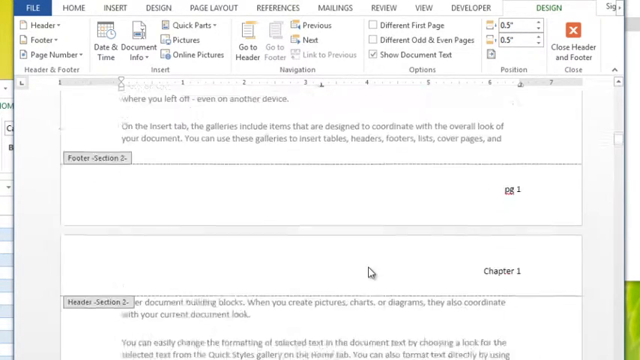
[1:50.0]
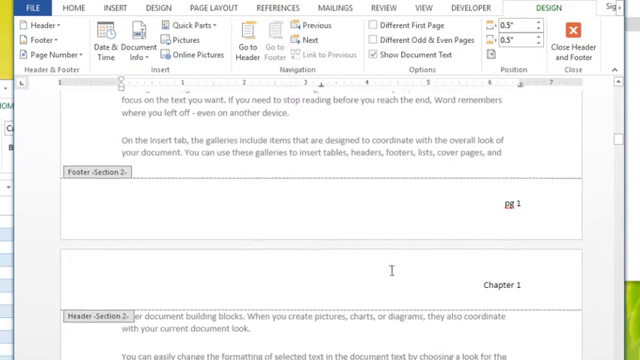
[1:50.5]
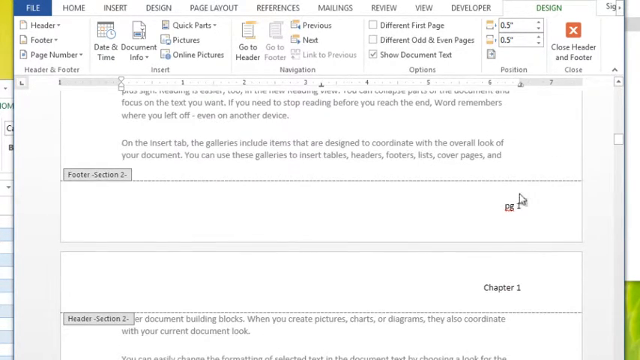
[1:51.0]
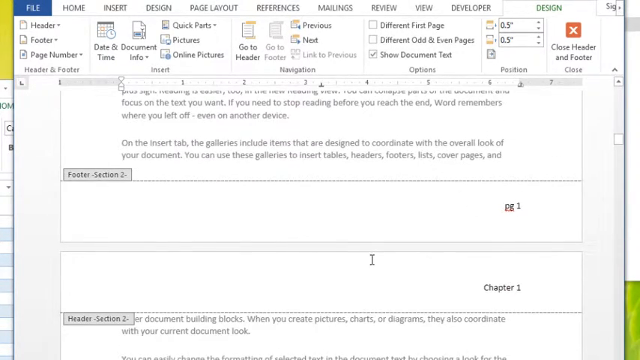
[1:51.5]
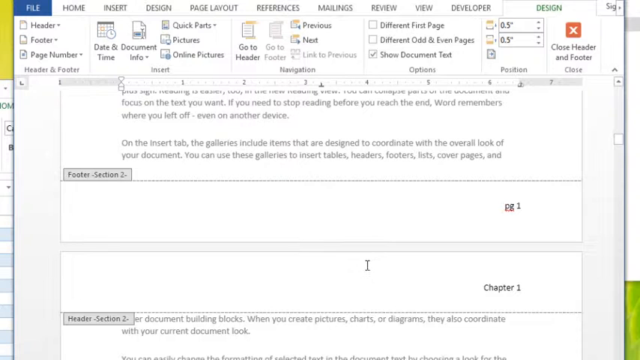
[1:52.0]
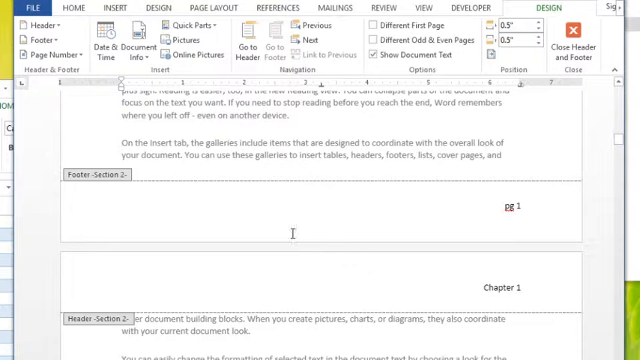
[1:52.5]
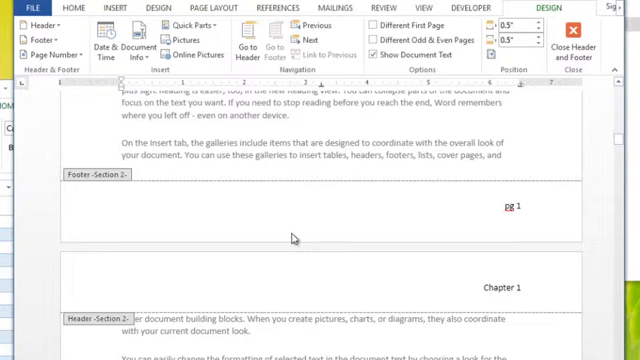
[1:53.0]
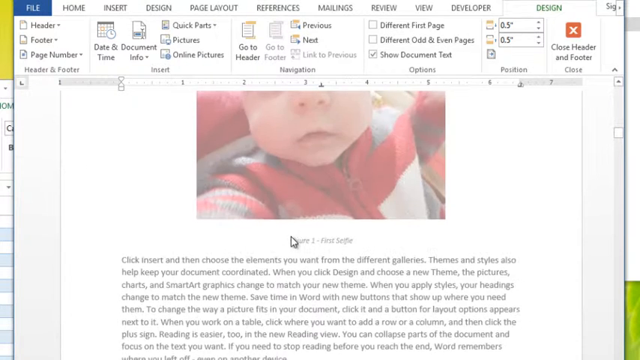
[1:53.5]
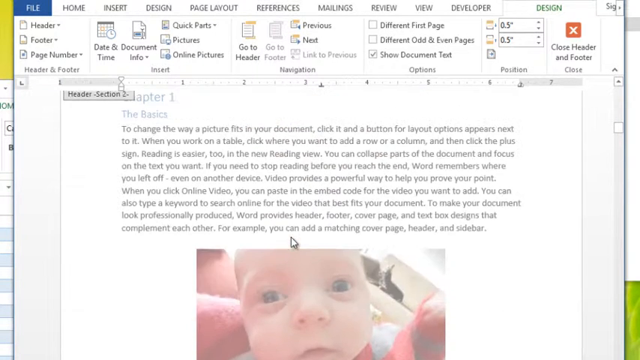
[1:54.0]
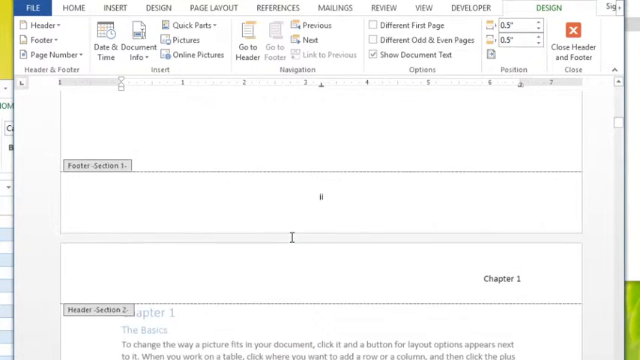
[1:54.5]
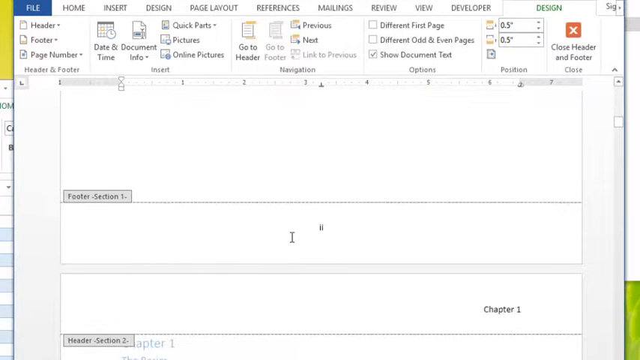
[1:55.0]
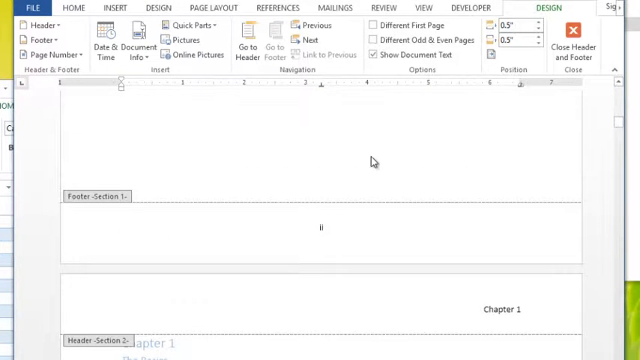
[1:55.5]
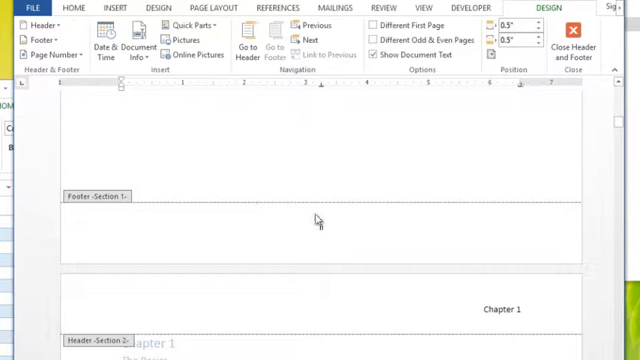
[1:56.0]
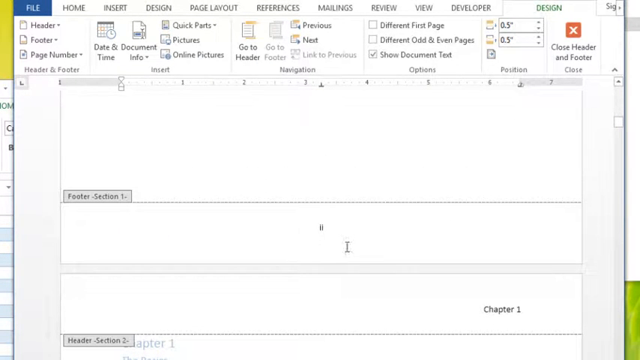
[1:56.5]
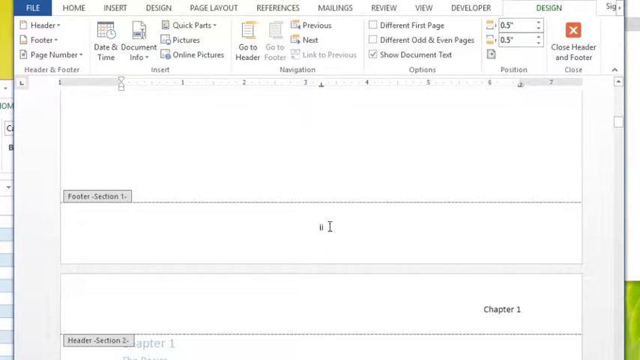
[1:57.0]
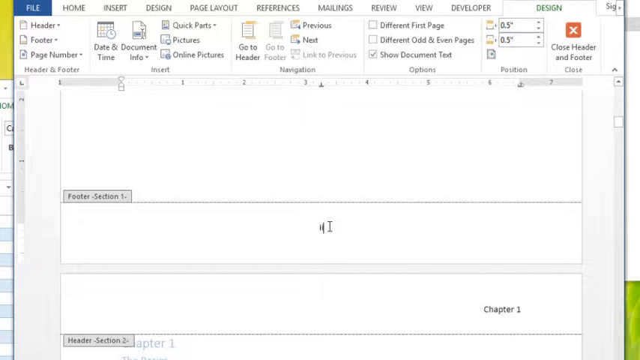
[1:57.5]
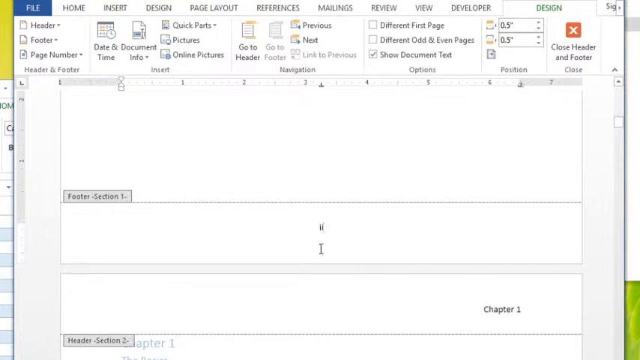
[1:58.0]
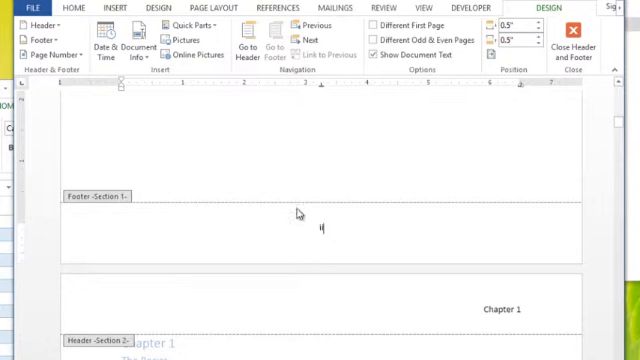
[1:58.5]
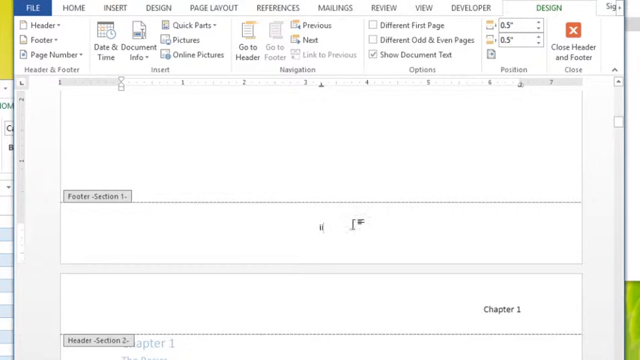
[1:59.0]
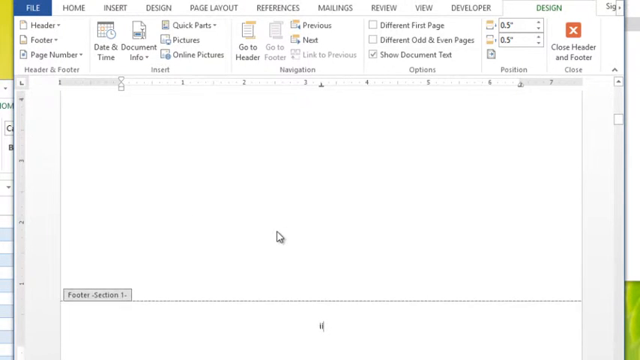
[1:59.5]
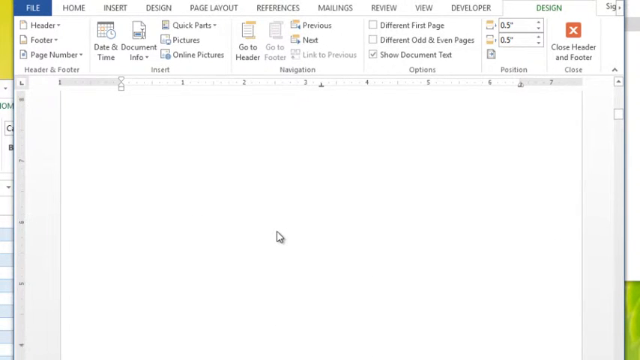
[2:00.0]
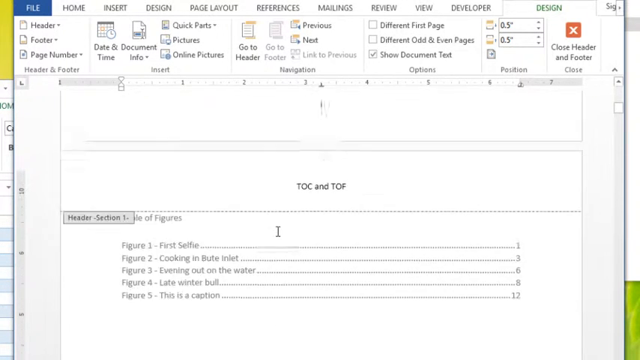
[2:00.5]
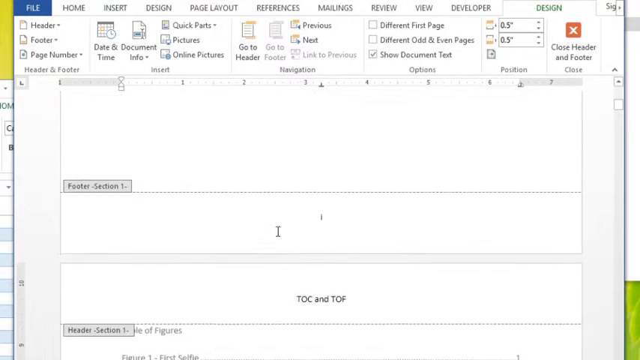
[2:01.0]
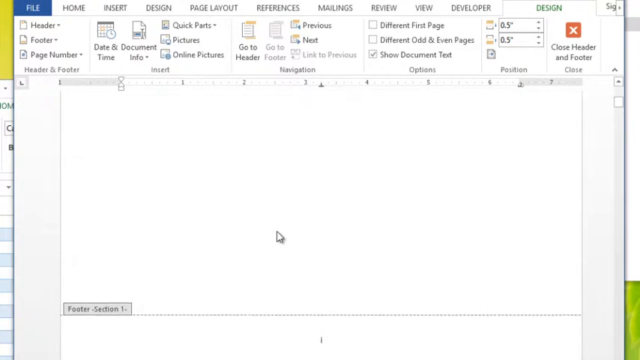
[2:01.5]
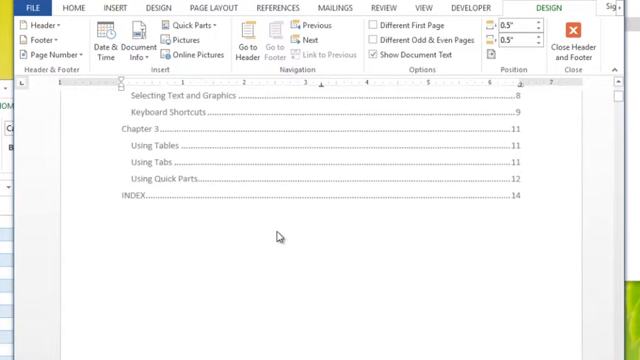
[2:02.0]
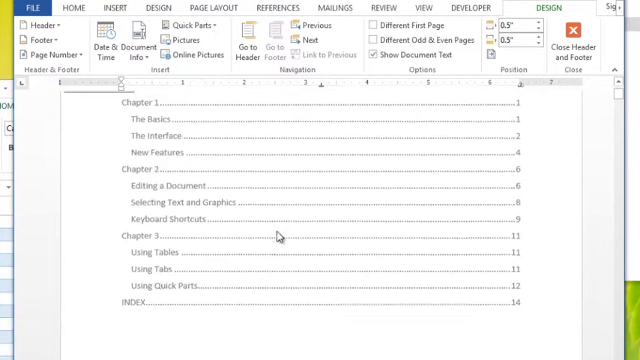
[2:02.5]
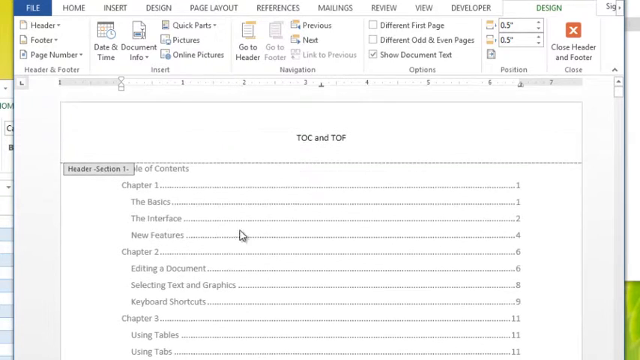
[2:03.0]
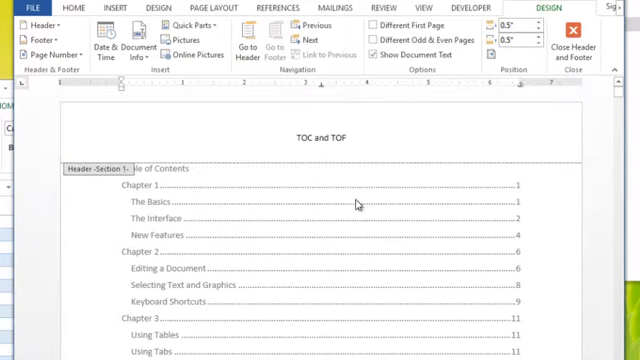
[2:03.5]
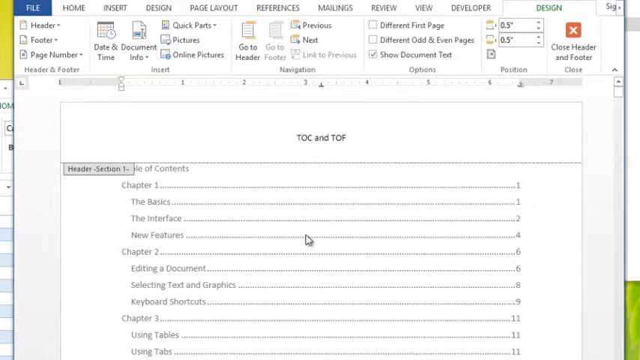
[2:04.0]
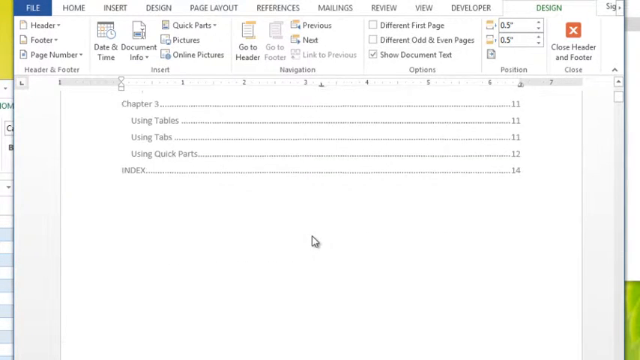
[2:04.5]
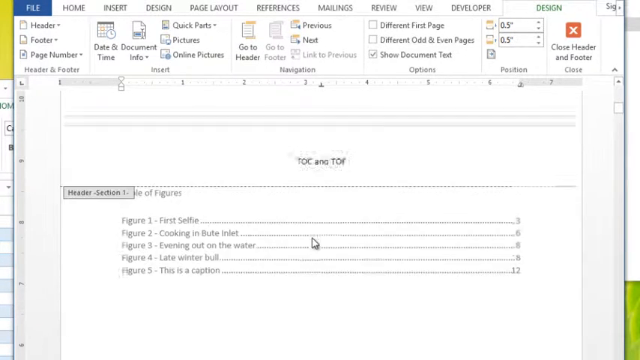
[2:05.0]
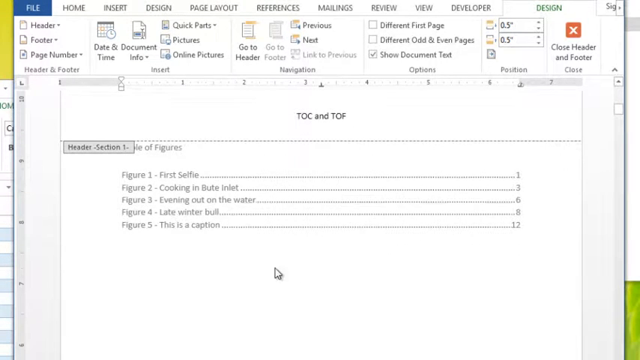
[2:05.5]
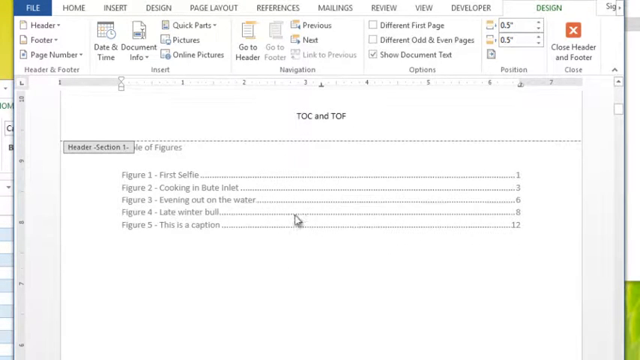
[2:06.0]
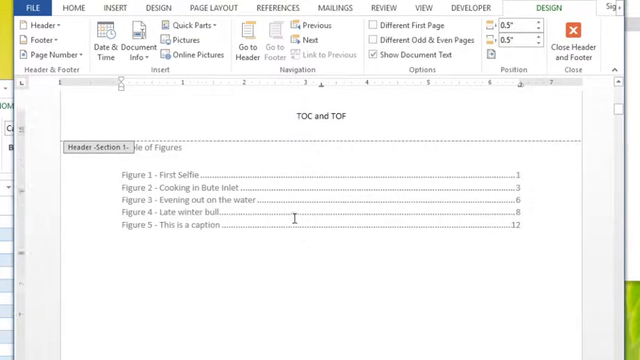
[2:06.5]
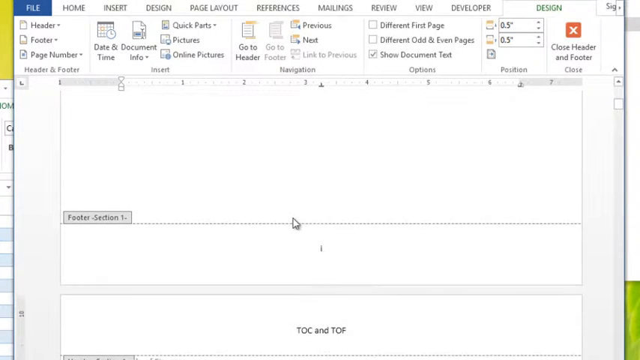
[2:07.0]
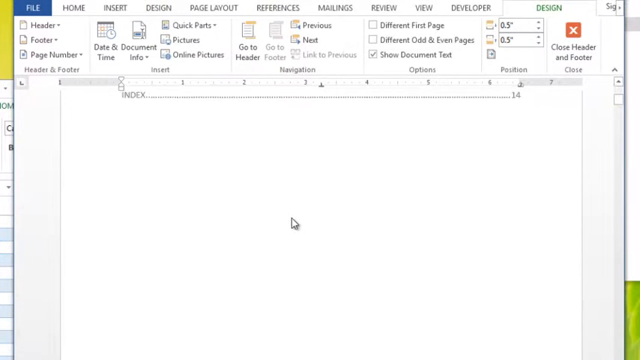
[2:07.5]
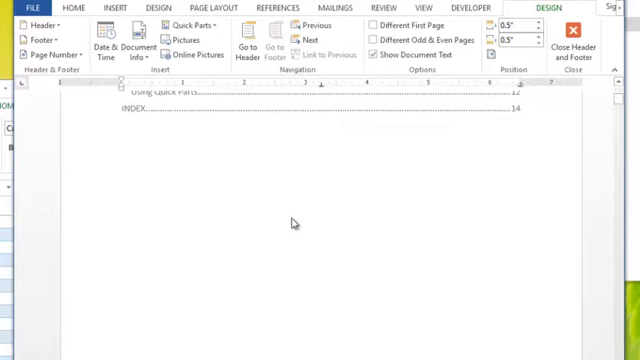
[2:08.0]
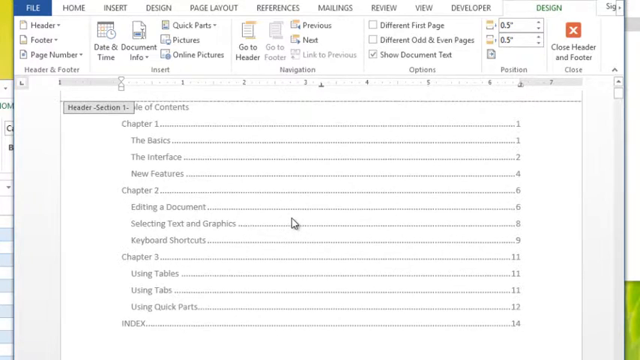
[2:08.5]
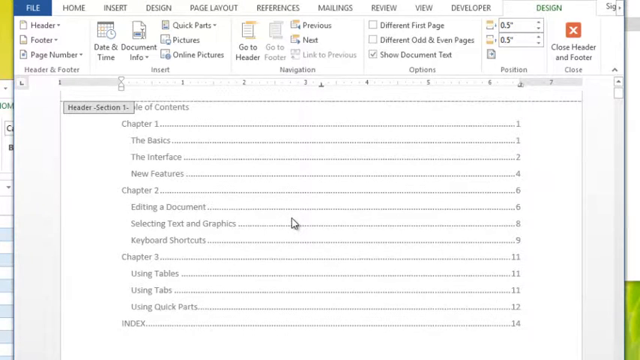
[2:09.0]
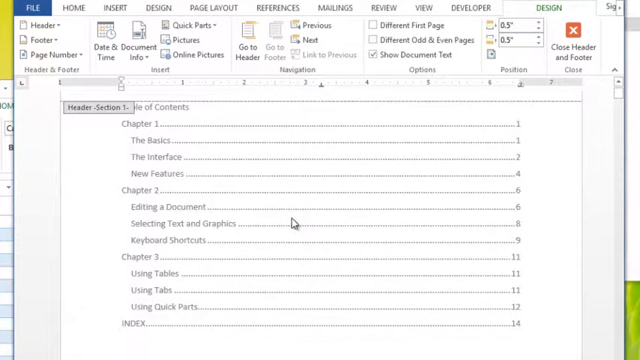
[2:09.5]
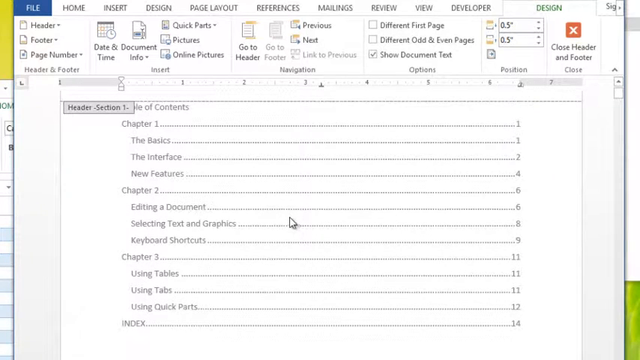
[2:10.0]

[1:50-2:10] The Roman numerals are shown, with the view moving up and down and the cursor circling around the Roman numerals a couple of times. The view then goes back up to the table of contents, and the cursor circles around parts of it. The header and footer apparently are opened and closed.